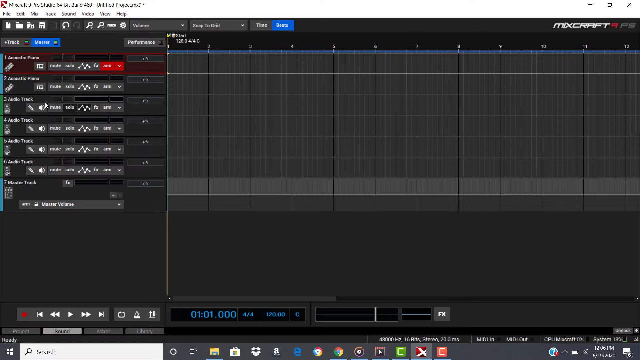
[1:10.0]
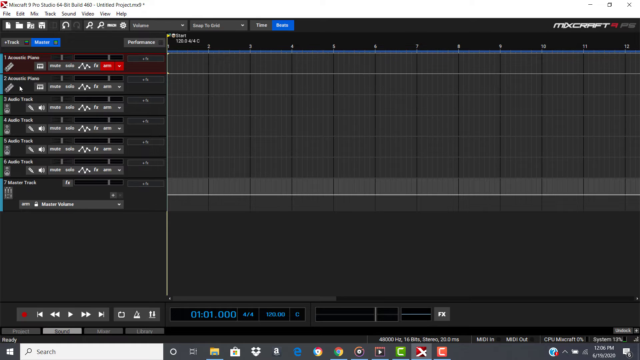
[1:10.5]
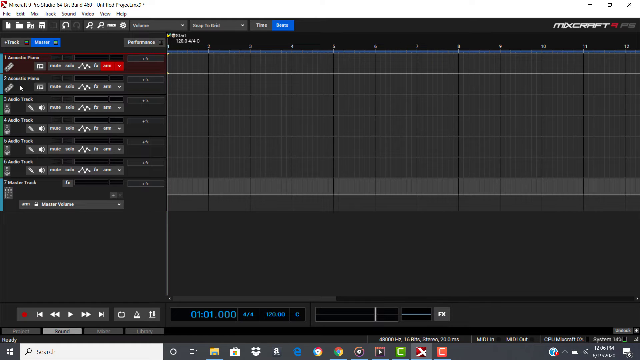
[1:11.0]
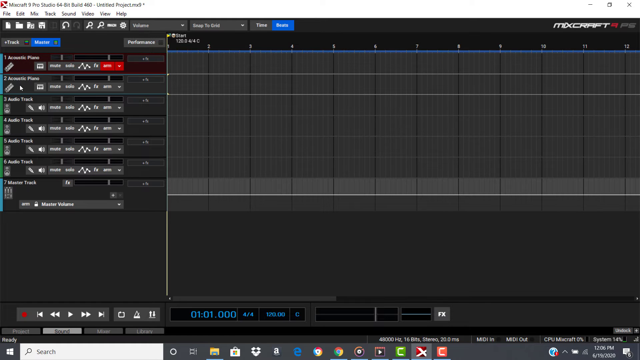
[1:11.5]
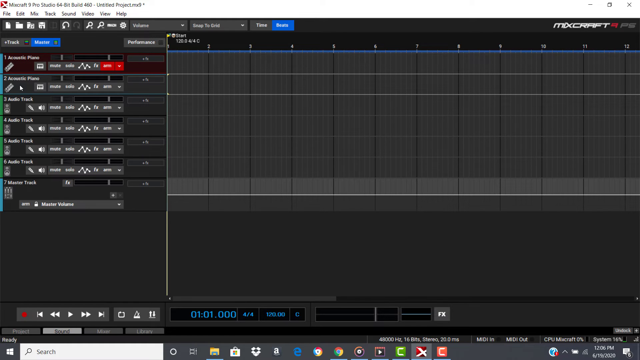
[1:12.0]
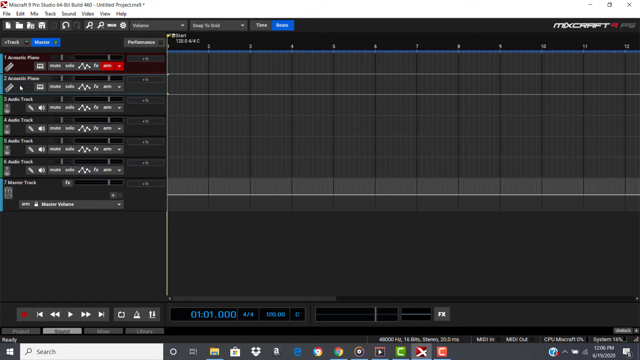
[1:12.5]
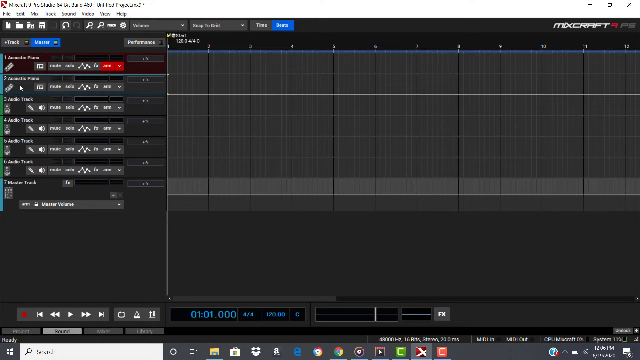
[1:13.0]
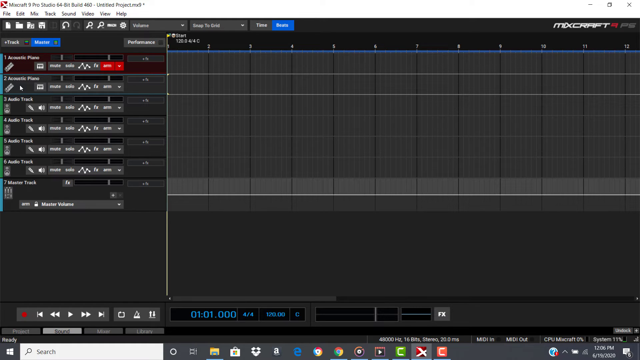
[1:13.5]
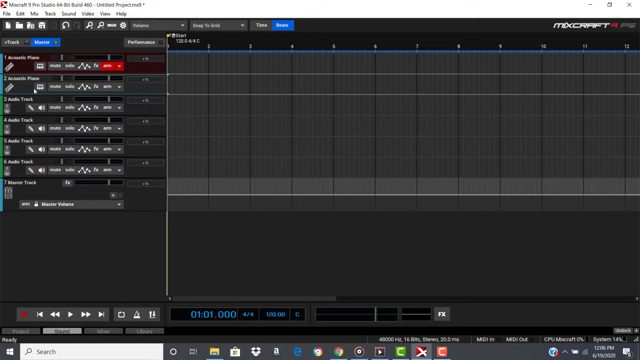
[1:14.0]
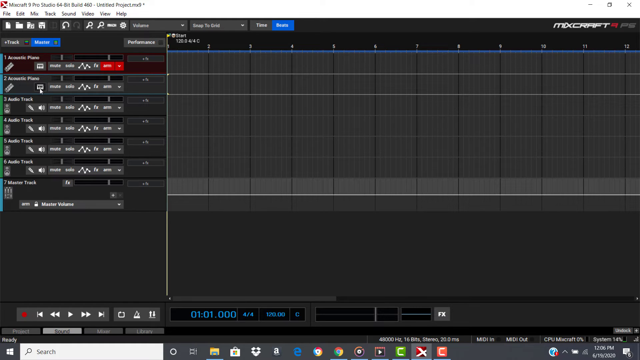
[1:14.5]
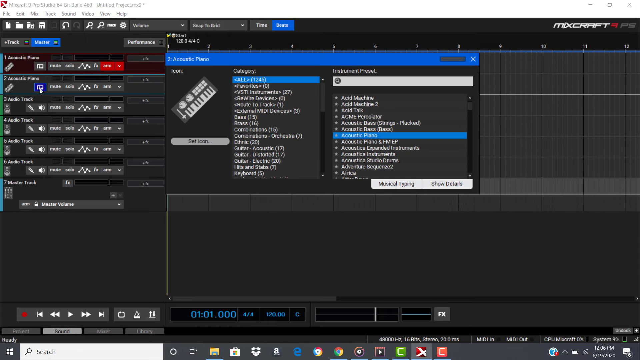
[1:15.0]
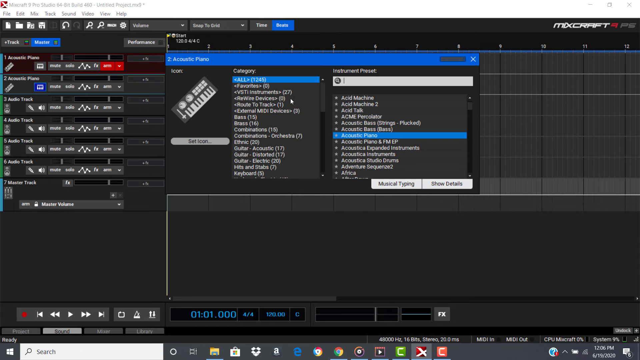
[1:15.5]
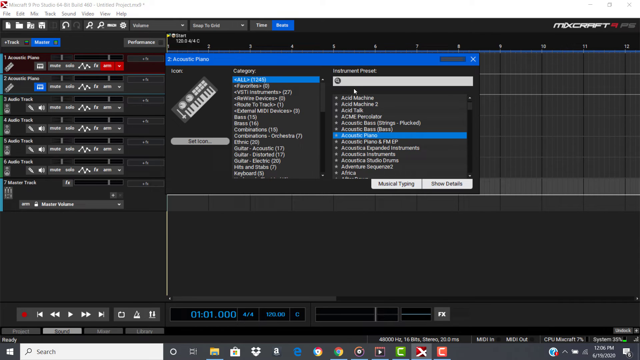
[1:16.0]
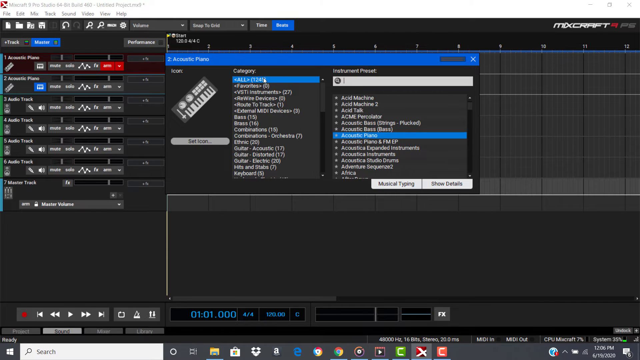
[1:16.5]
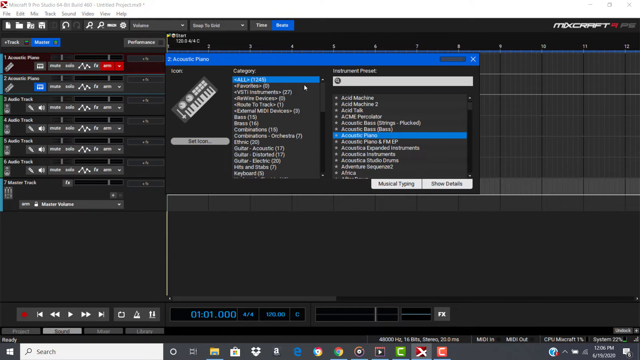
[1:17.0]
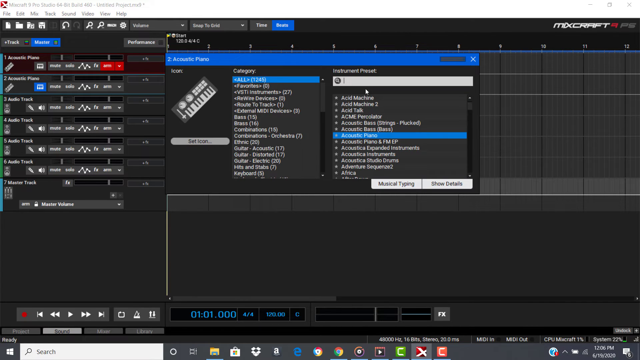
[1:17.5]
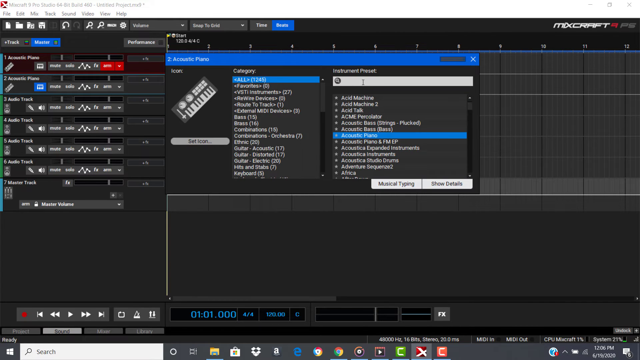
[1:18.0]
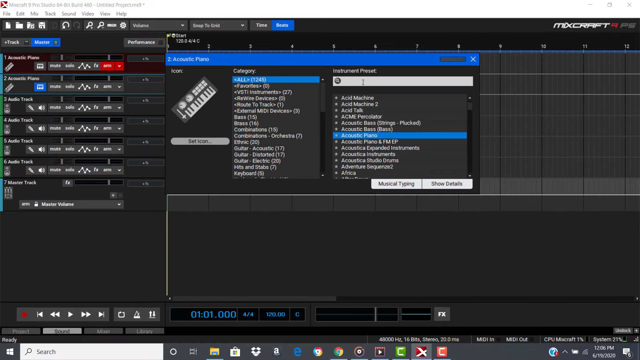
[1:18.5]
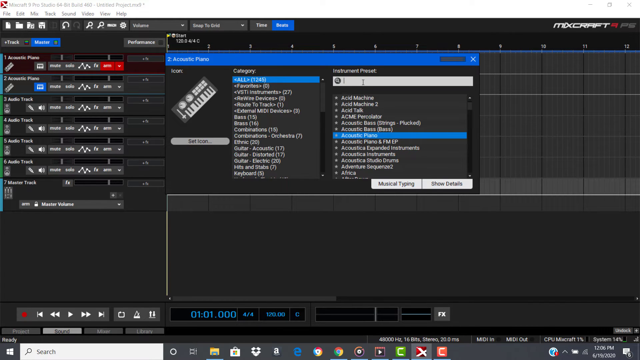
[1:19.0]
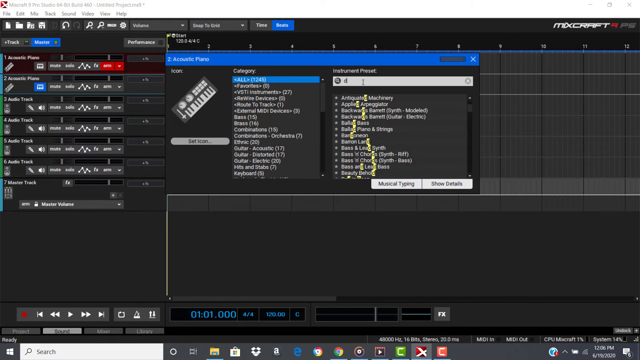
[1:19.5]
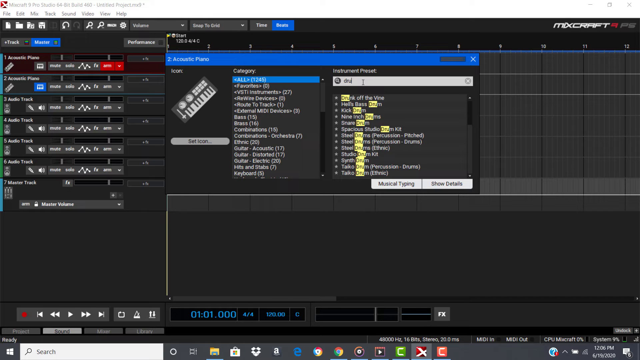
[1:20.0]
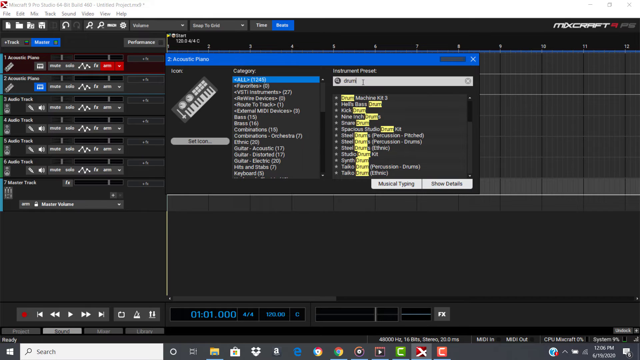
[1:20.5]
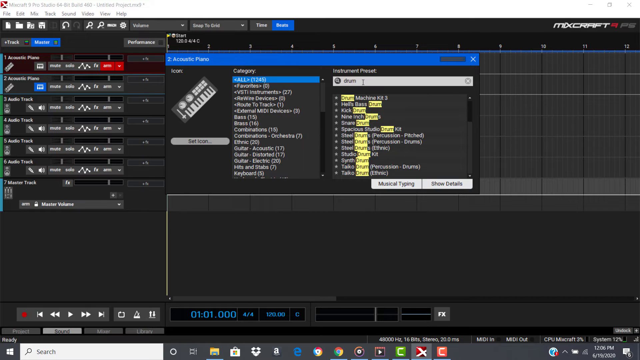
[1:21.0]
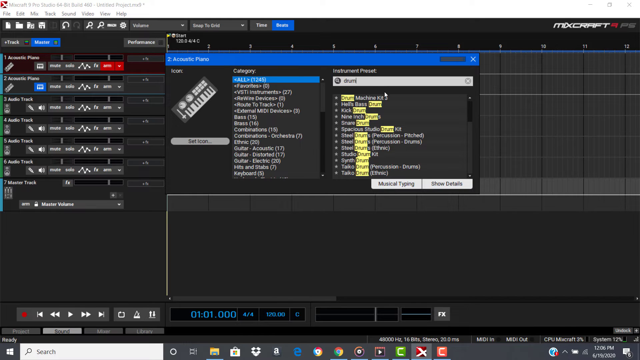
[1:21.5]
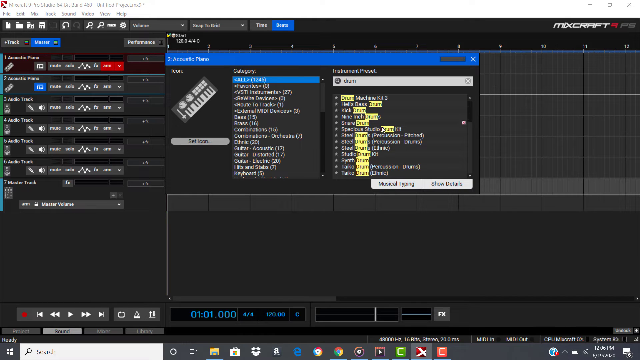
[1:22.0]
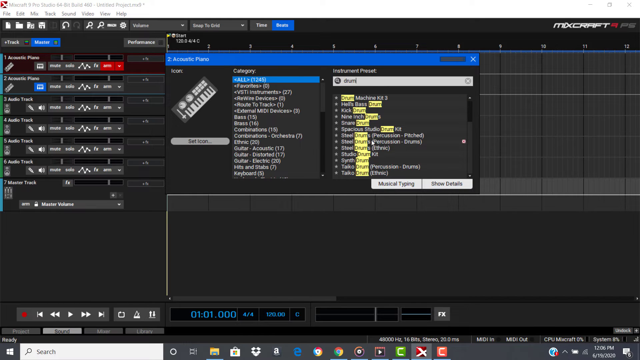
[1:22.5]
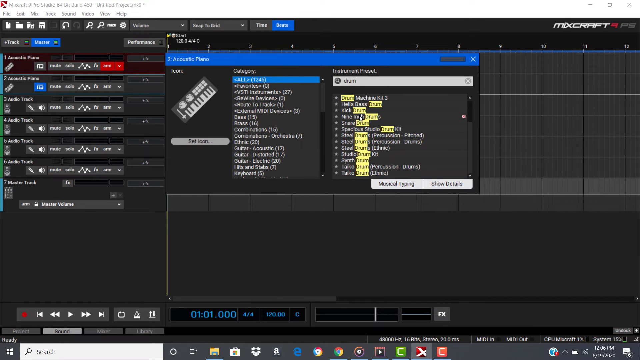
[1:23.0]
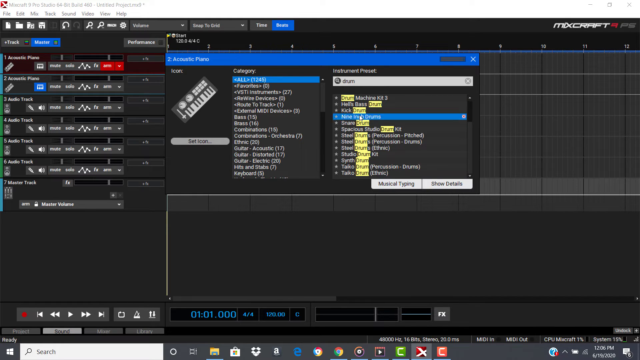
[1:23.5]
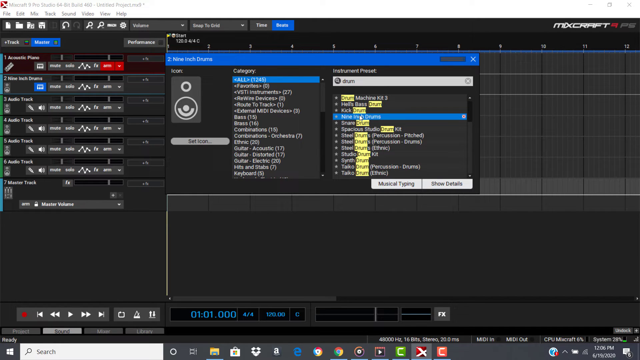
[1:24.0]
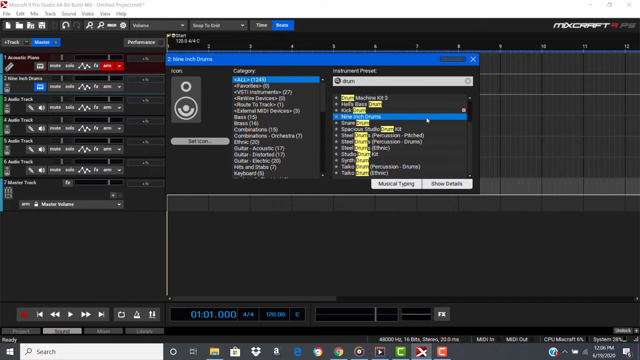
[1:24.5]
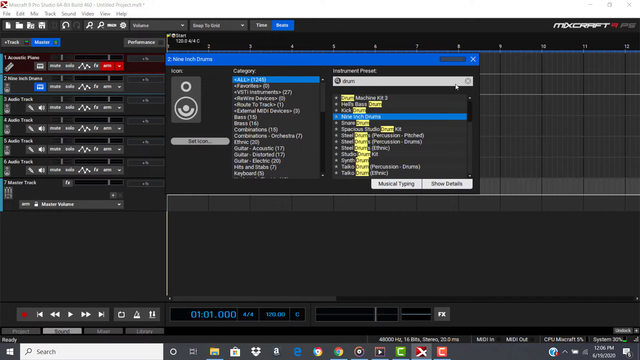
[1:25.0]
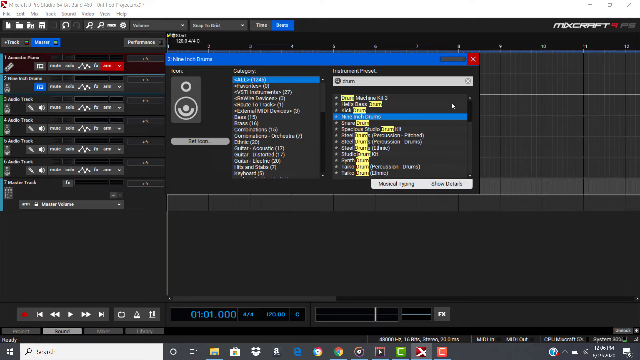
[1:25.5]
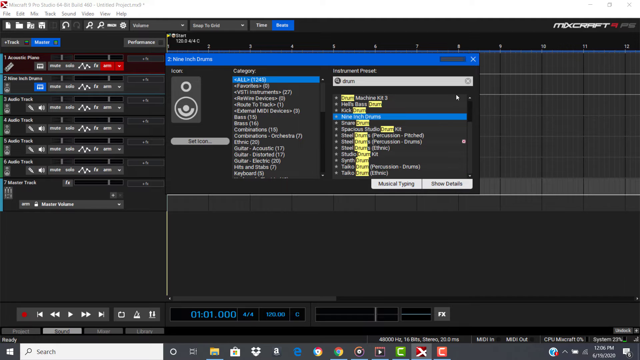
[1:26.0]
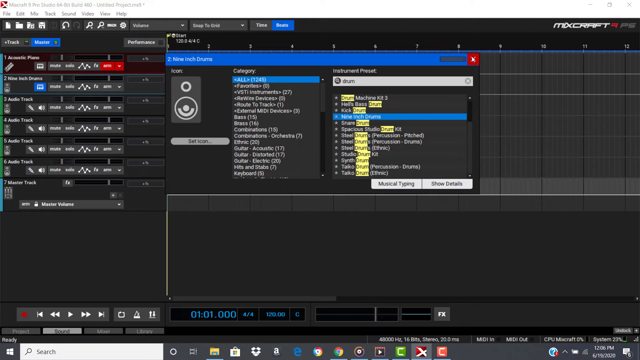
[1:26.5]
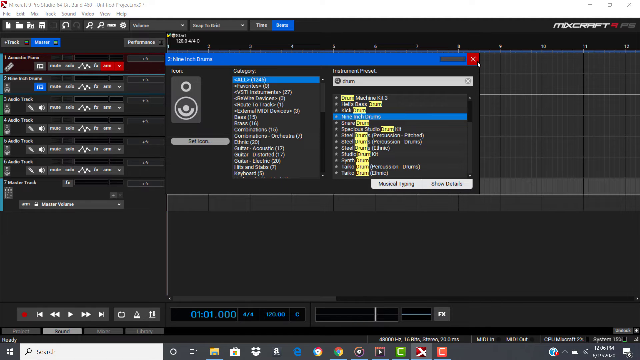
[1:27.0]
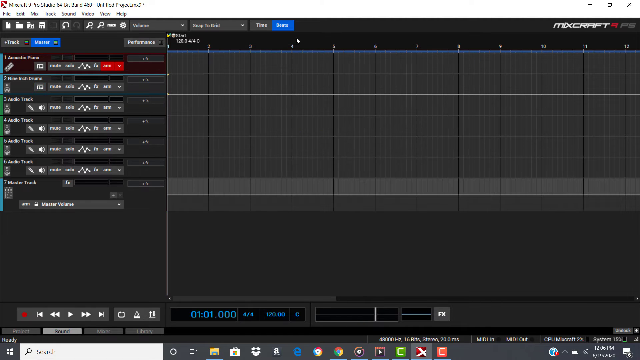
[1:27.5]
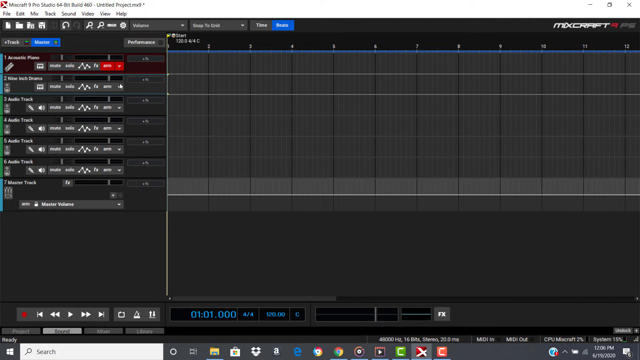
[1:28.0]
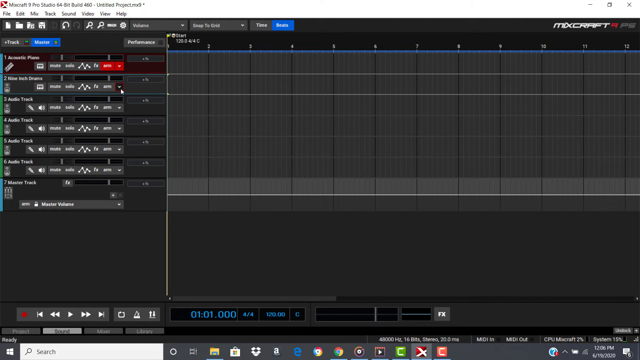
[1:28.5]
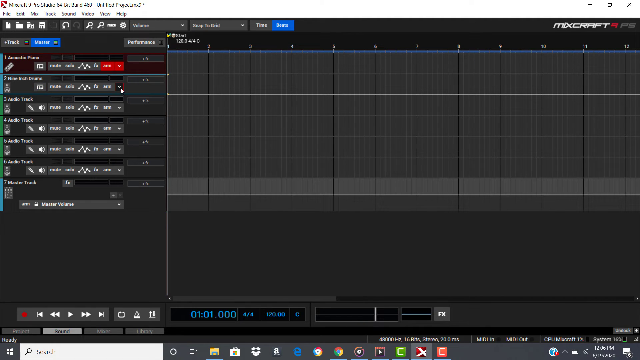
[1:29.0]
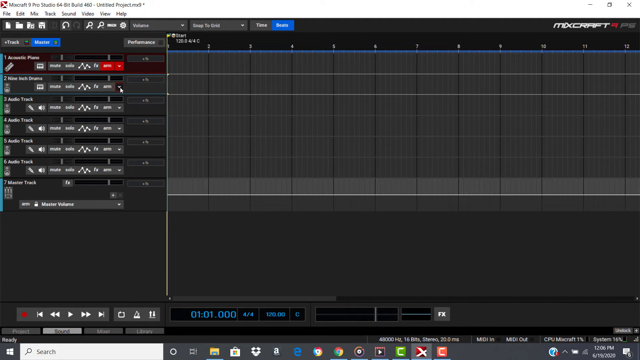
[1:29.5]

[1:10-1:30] Someone's computer screen shows the upper right corner saying "MixCraft". The program is very gray and black, with different columns; there look to be maybe at least a dozen columns on the right side. On the left are numbers 1 through 7 with different labels: the first says "Acoustic Piano" and some further down say "Audio Track". The cursor clicks on number 2, a little box appears, and it clicks on that box. Another box opens, a word on a row is highlighted, and the box closes. The cursor then goes on to some of the other boxes on the left side, clicking on different icons that open boxes and clicking on different commands.